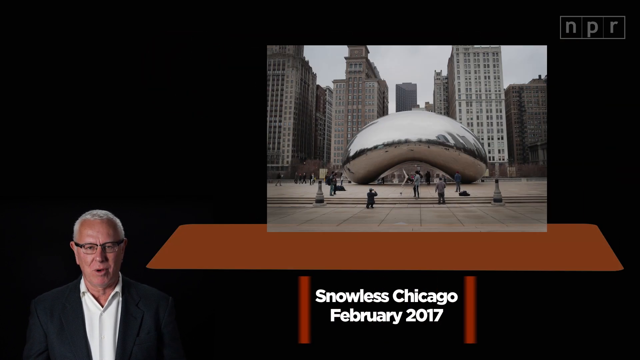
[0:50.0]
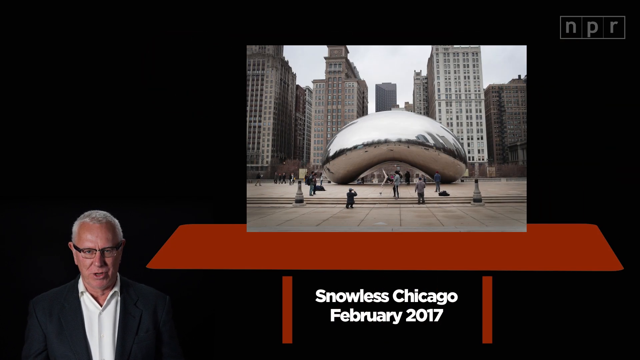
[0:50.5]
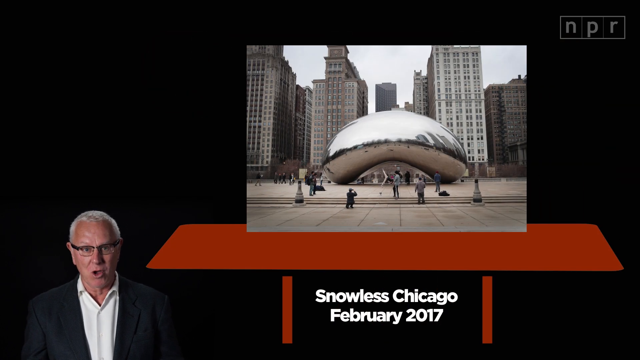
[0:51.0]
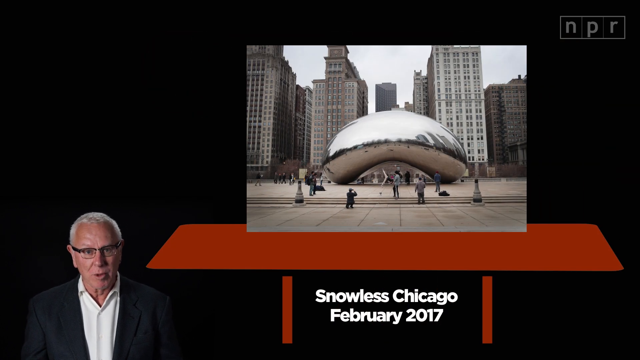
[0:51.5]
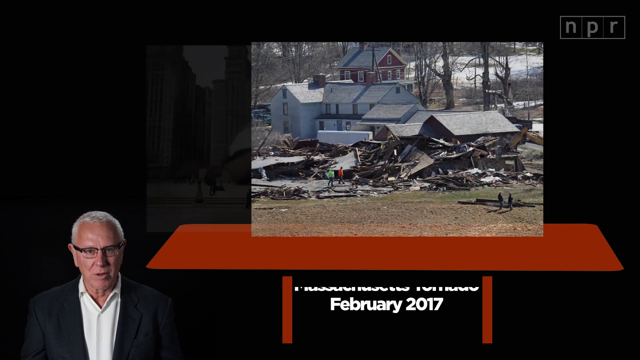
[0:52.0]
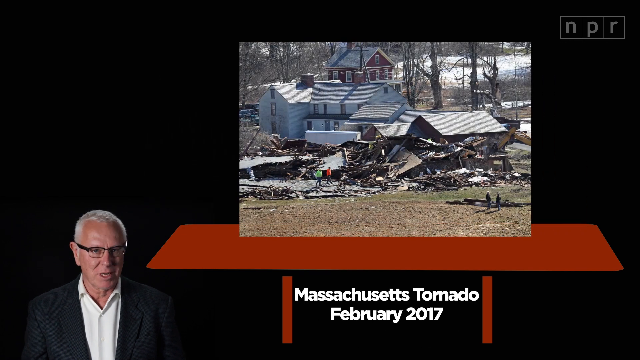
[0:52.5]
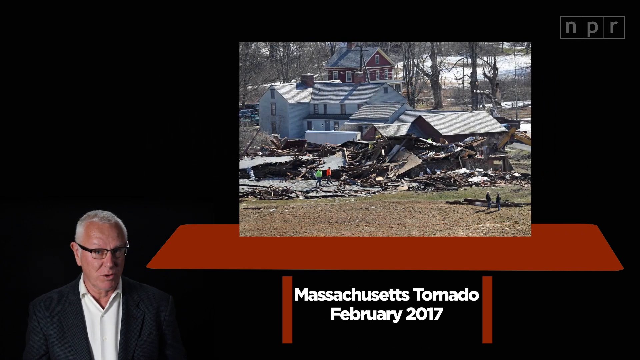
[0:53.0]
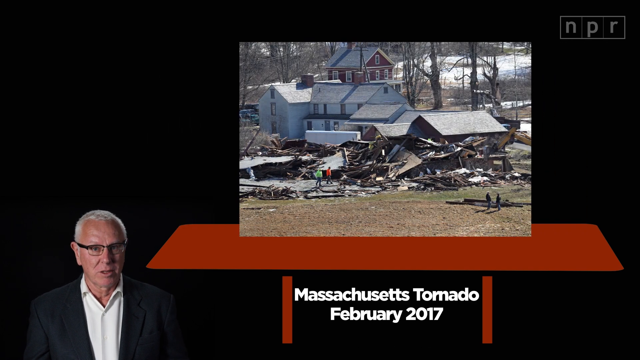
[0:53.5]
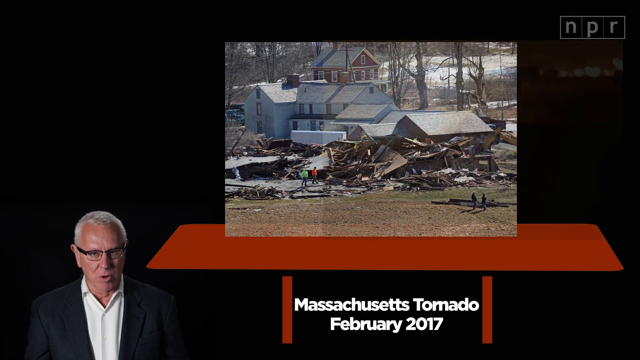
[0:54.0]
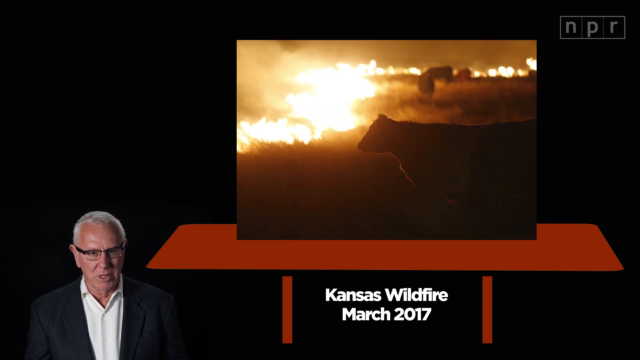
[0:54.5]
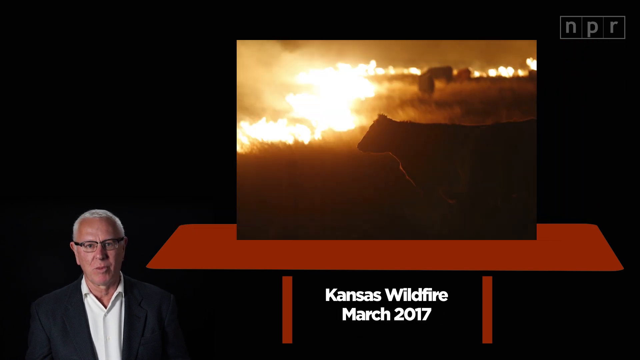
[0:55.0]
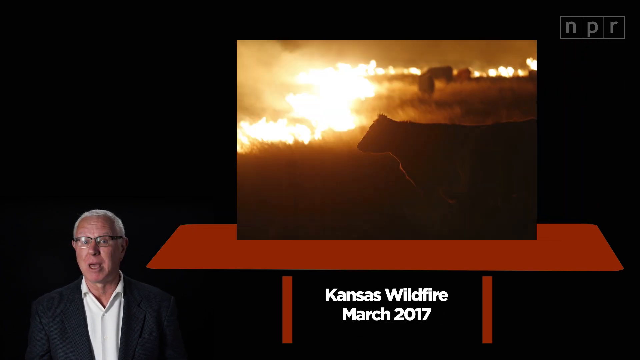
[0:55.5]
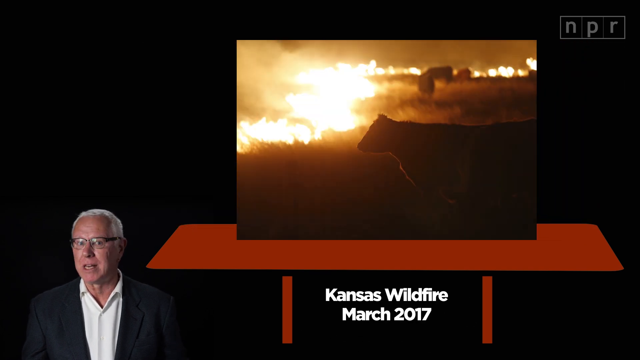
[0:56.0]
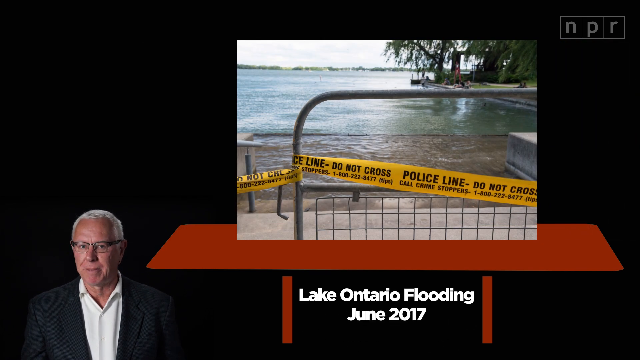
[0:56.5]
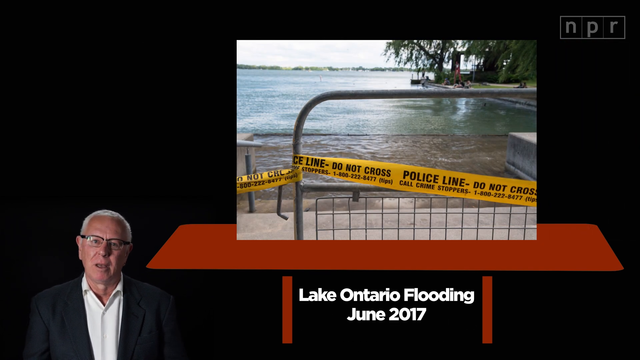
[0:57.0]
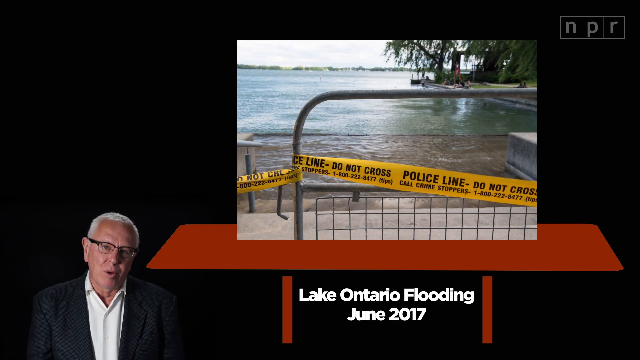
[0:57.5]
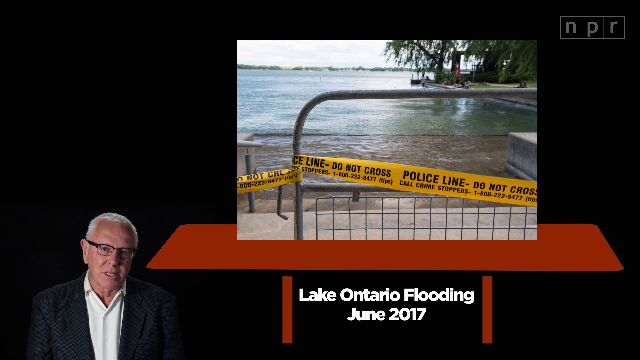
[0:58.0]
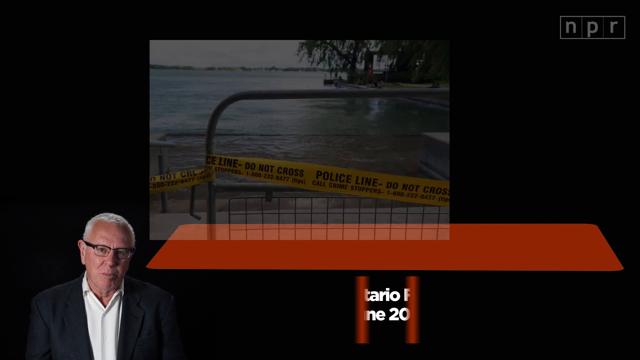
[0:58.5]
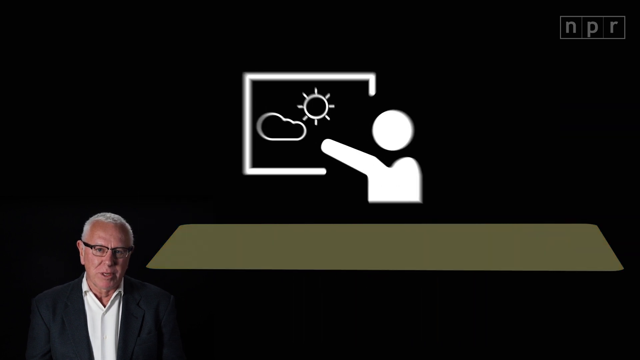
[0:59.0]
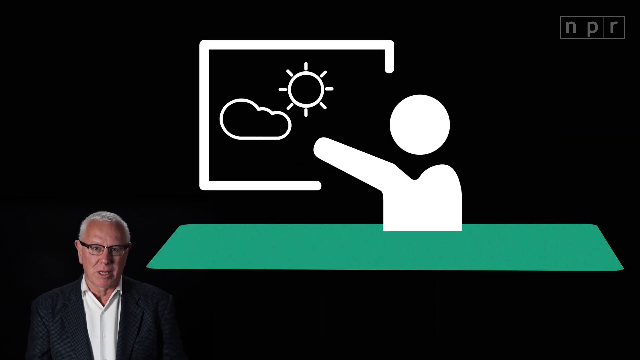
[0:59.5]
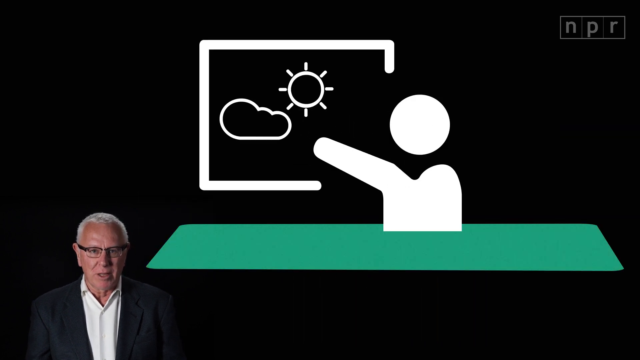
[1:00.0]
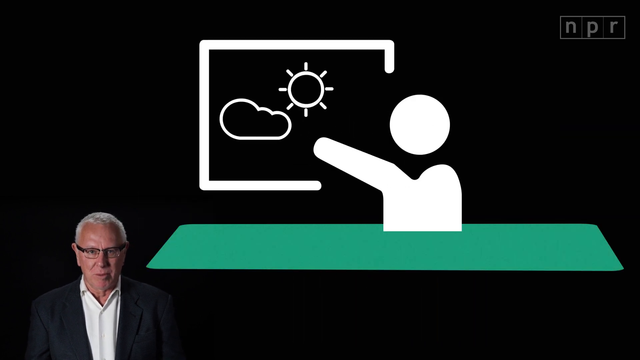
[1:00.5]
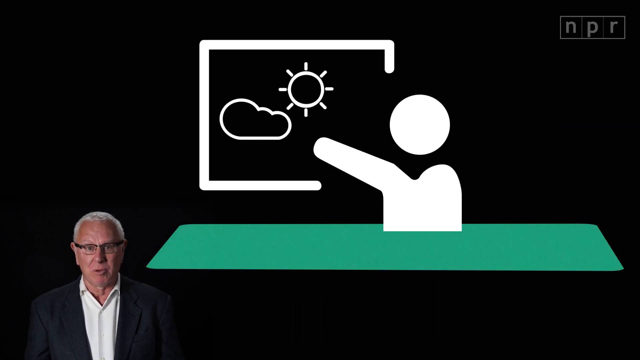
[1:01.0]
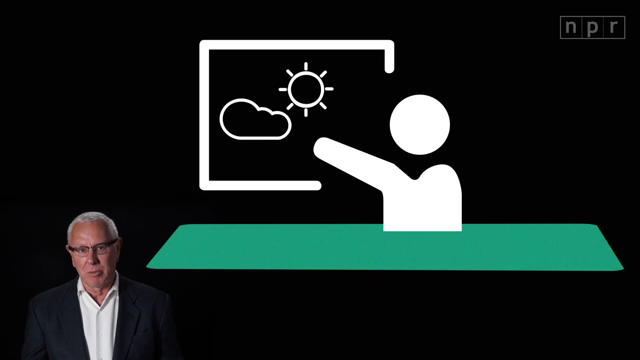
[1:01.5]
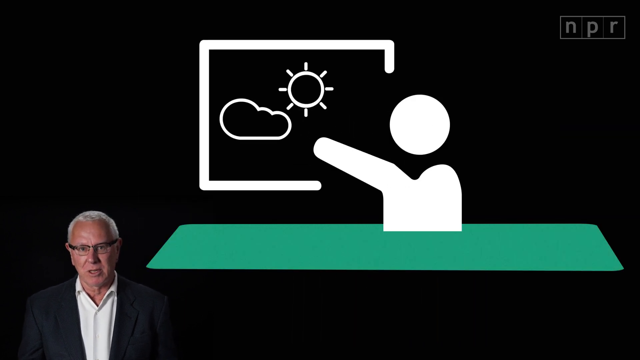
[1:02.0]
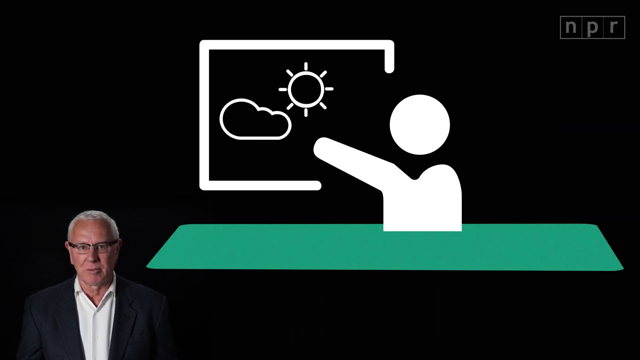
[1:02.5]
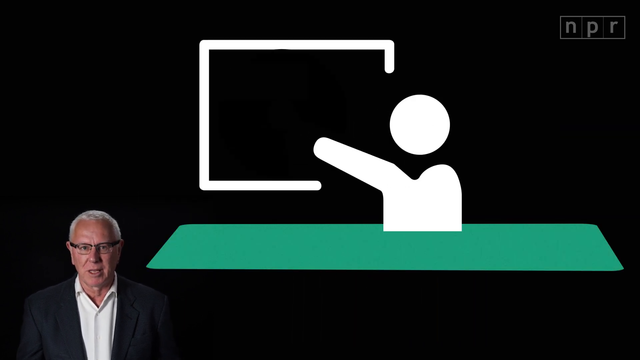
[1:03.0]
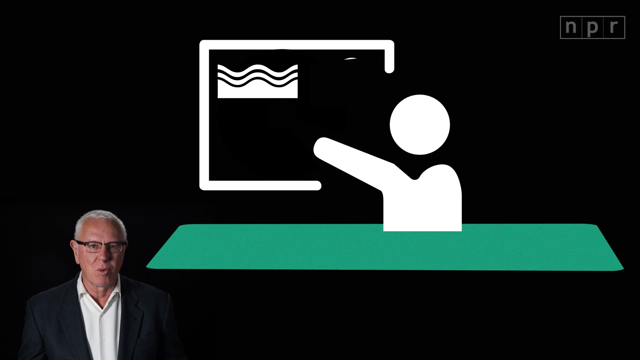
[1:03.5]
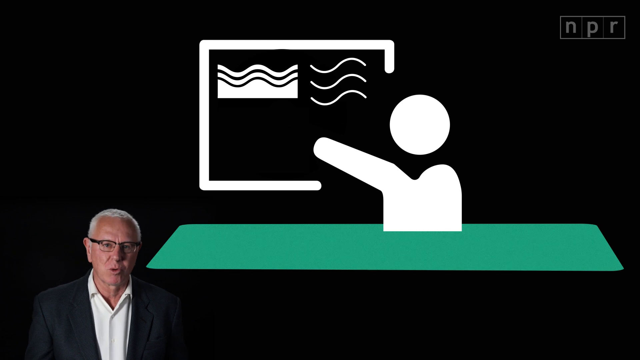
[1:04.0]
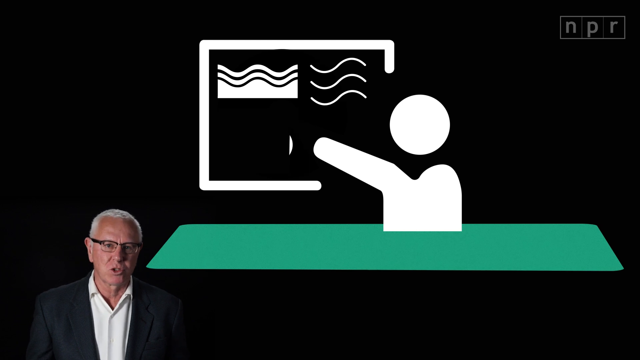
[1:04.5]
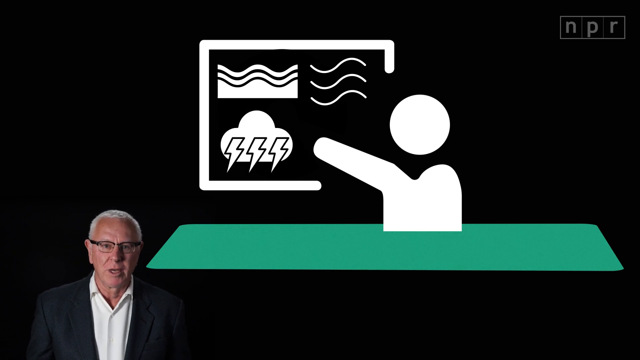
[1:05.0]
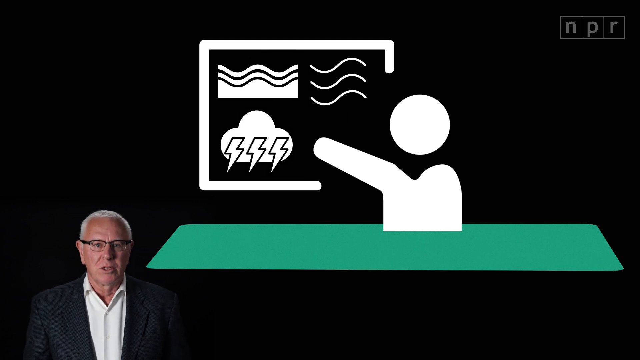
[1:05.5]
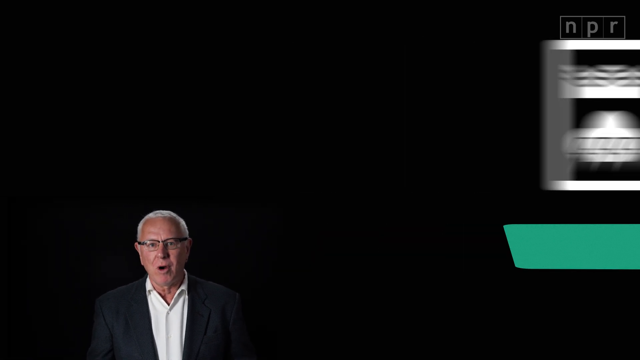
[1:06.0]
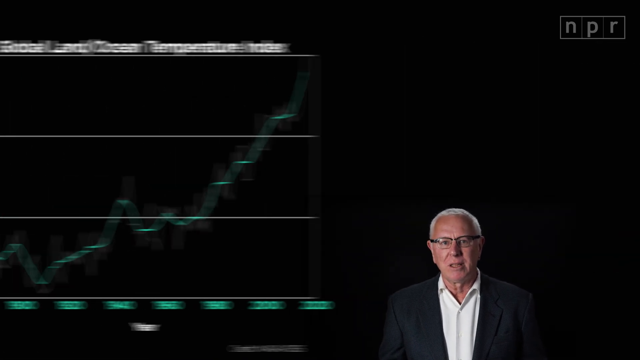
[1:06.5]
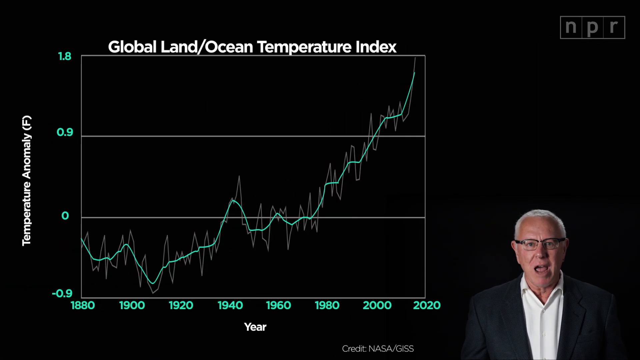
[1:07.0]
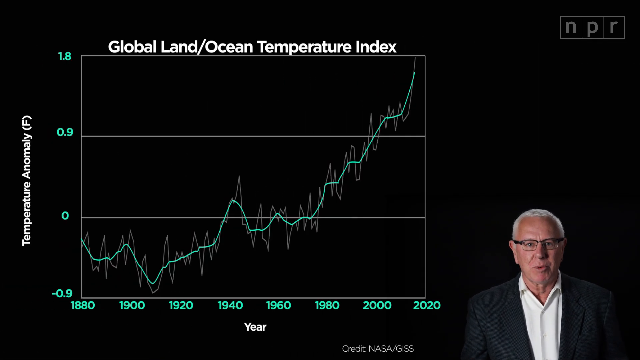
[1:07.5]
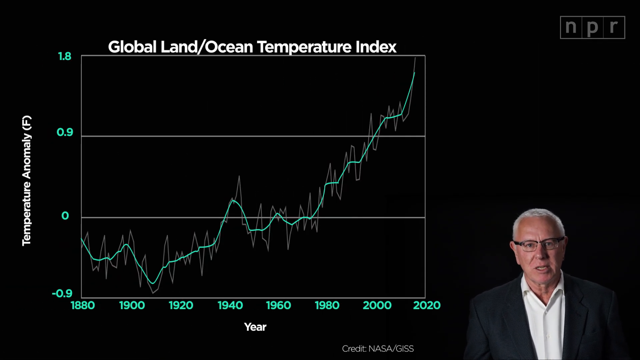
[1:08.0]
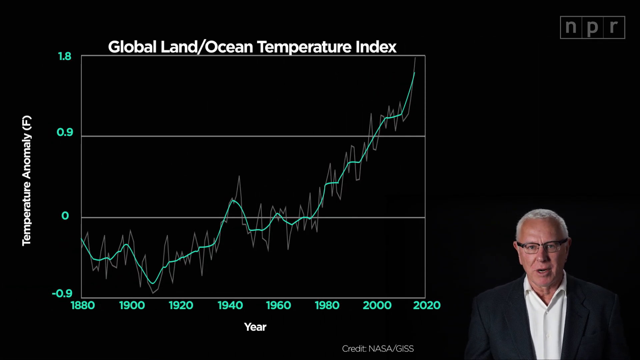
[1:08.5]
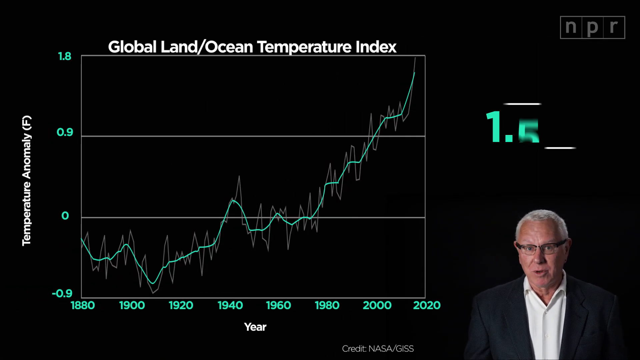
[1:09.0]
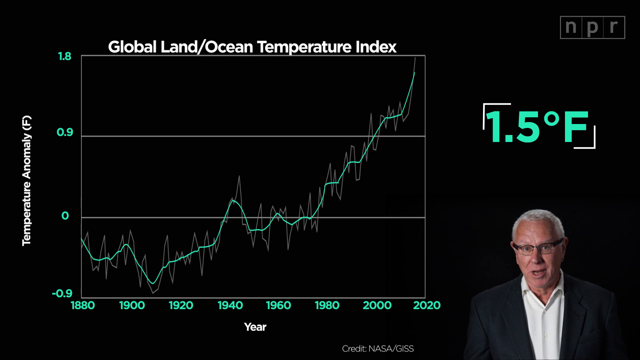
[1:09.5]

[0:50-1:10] The same man is in the lower left-hand corner. A picture taken in Chicago is labeled "Snowless, Chicago" and "February 2017." People are standing around taking a picture of the city, and something big is right in front of it near the beach. Next, text reads "Massachusetts tornado" and "February 2017," with a picture showing destruction of houses and land. Then text reads "Kansas wildfire" with March 2017, along with a picture of it, followed by "Lake Ontario flooding, June 2017." A digitally produced picture shows someone pointing at a cloud and a sun out a window, followed by waves, lightning and storms. The chart labeled "global land ocean temperature index" is shown, going way up, with text reading "1.5 degrees Fahrenheit."